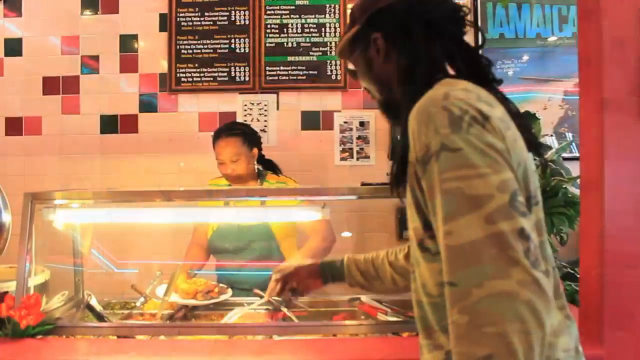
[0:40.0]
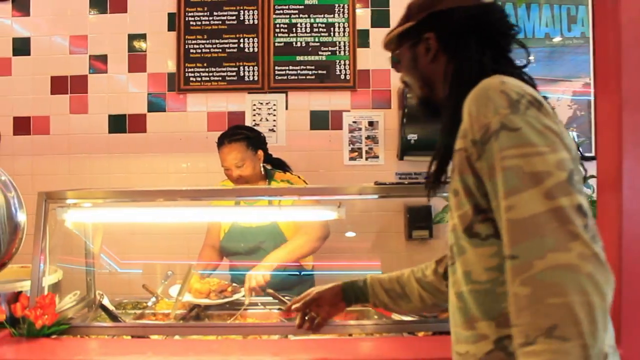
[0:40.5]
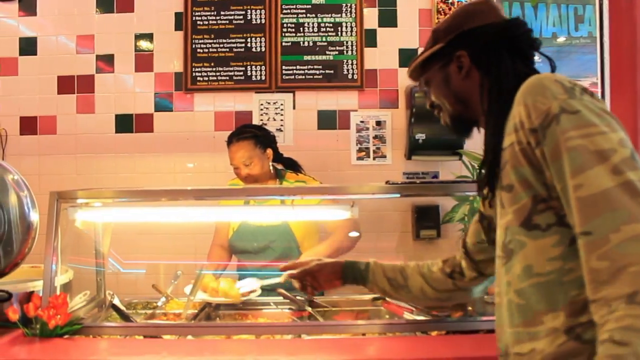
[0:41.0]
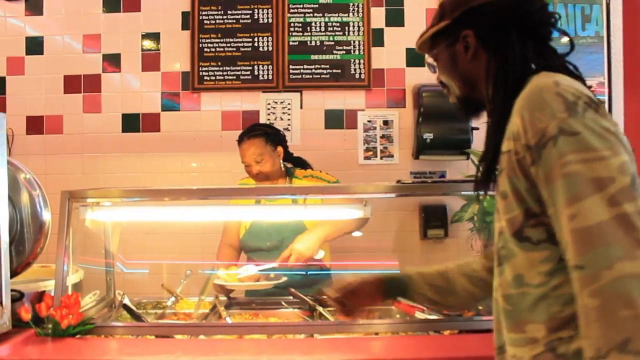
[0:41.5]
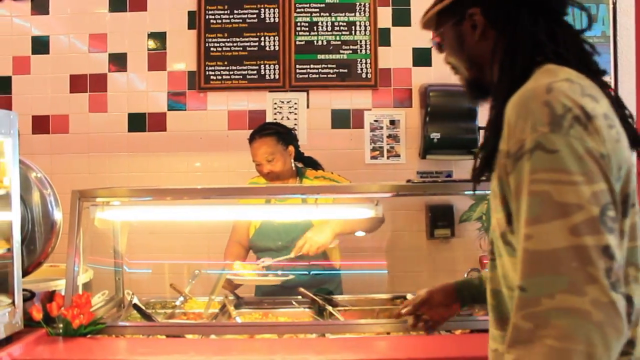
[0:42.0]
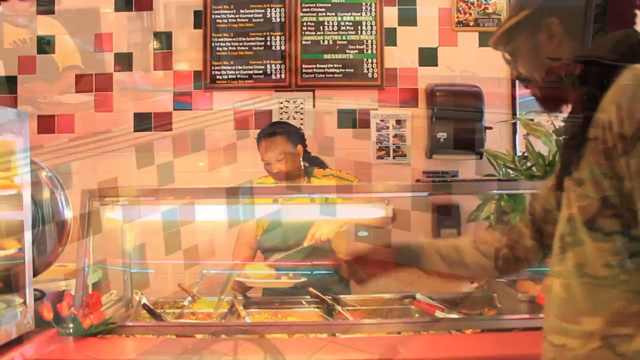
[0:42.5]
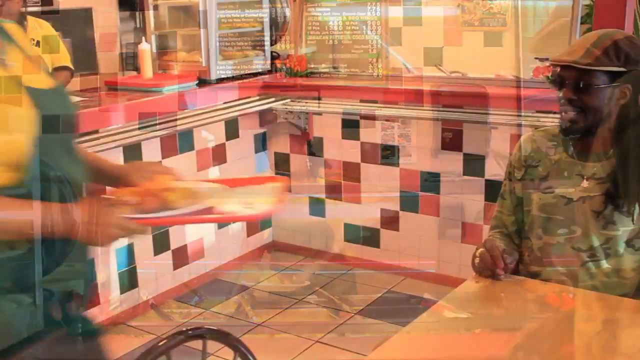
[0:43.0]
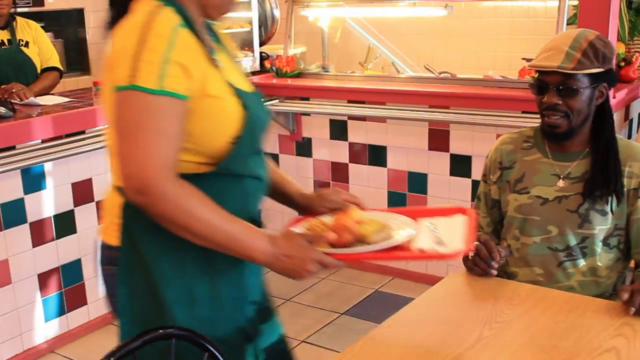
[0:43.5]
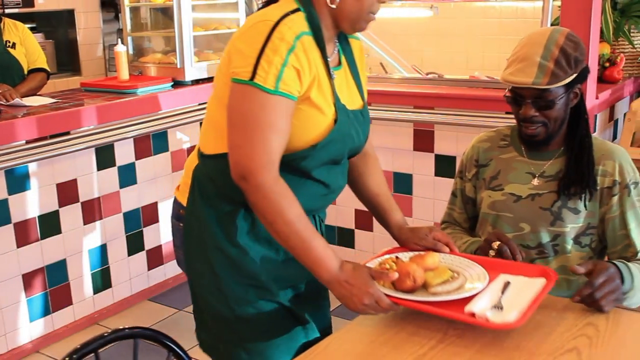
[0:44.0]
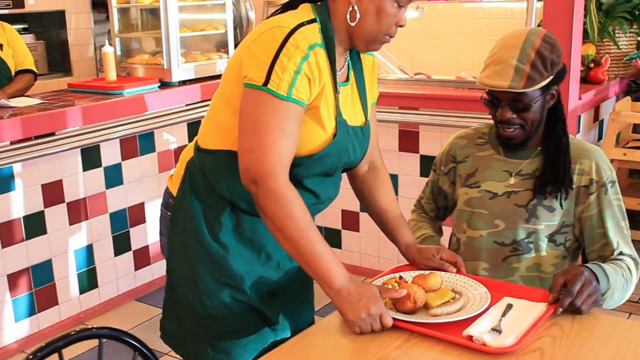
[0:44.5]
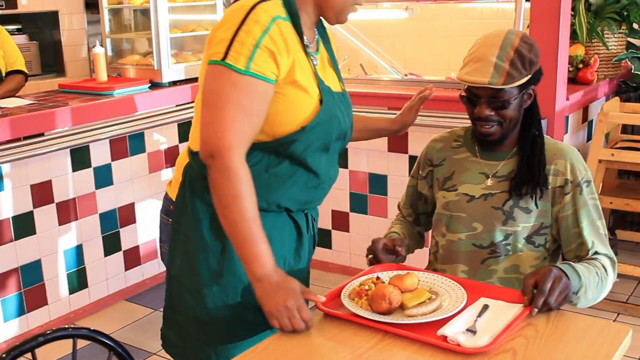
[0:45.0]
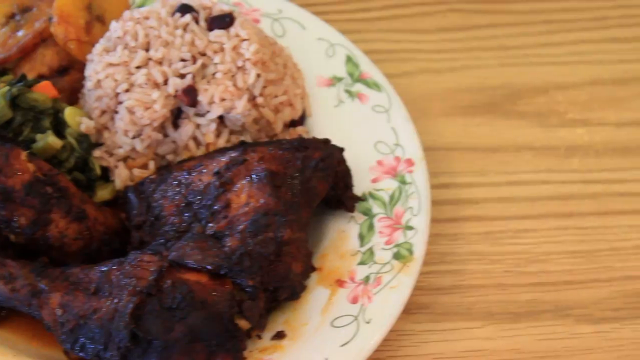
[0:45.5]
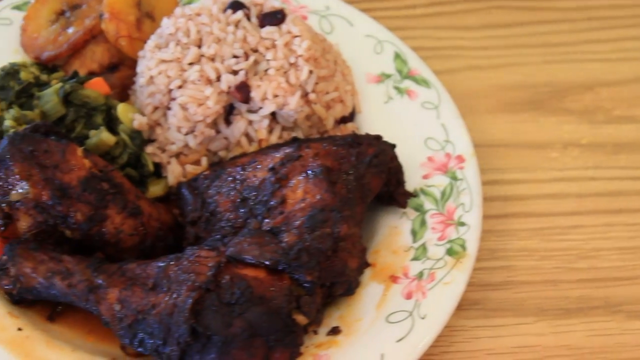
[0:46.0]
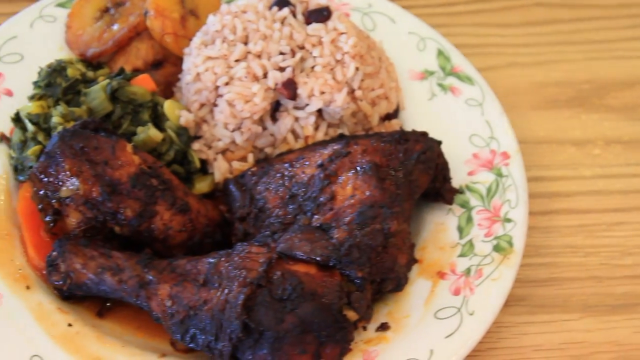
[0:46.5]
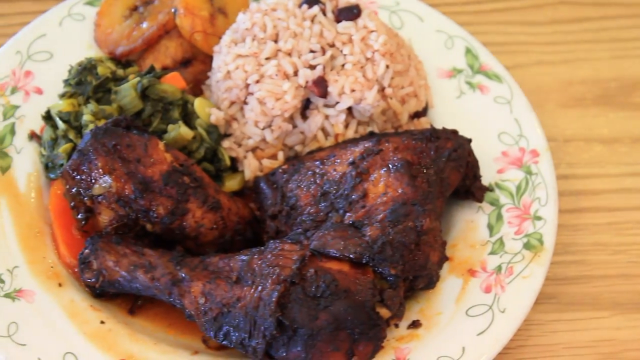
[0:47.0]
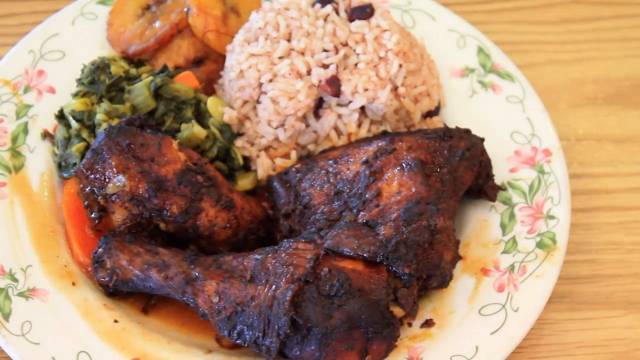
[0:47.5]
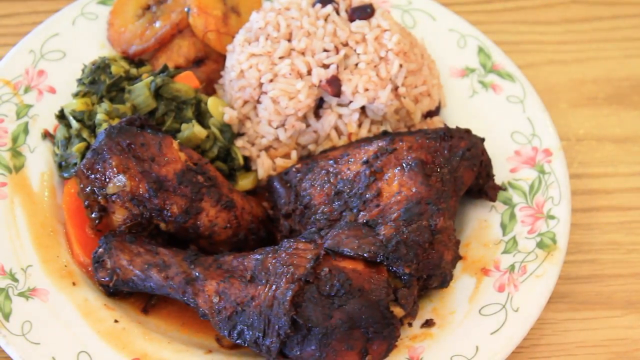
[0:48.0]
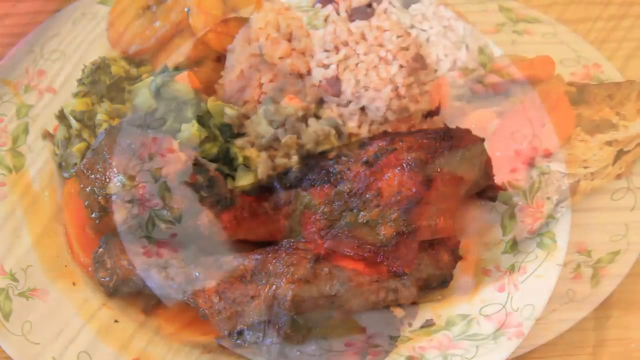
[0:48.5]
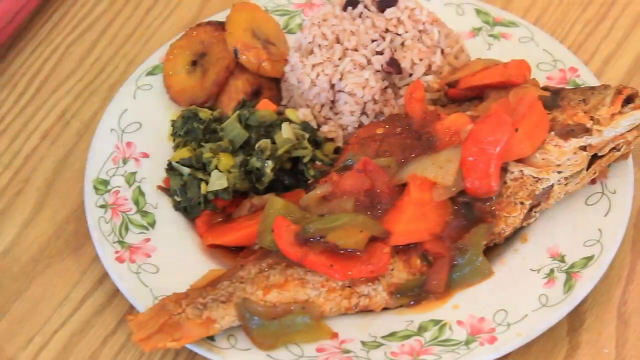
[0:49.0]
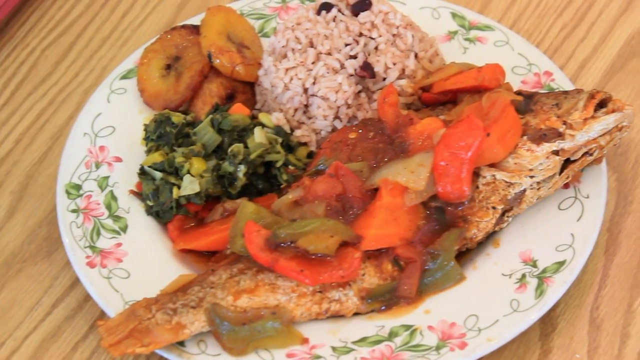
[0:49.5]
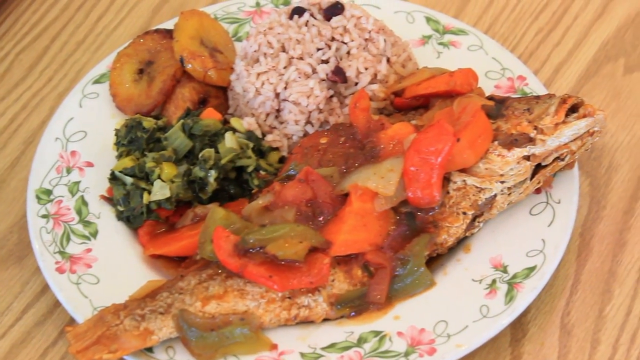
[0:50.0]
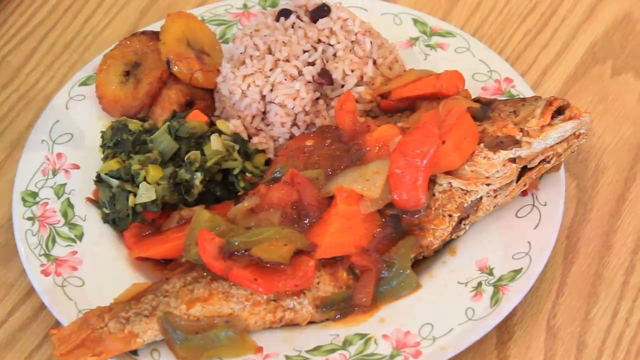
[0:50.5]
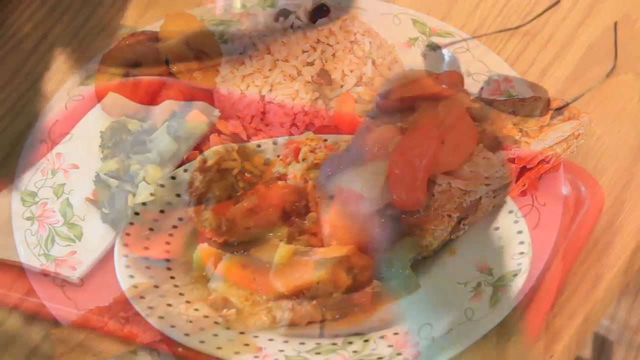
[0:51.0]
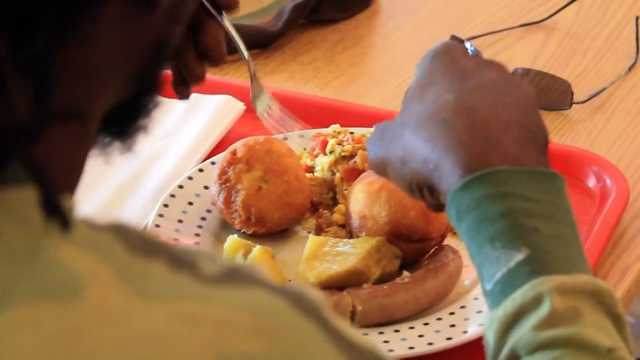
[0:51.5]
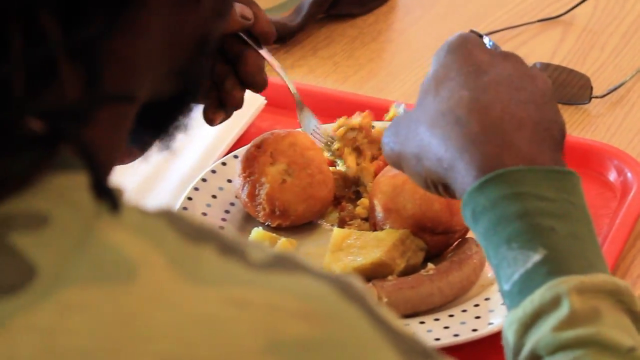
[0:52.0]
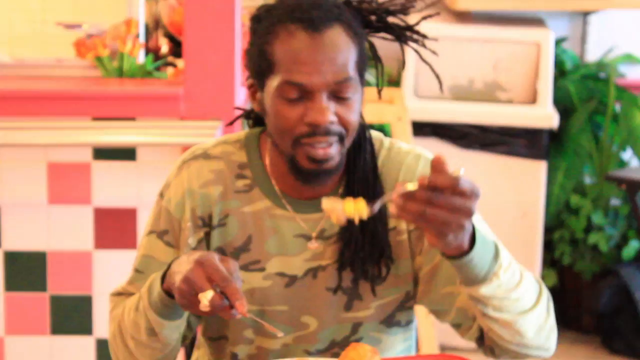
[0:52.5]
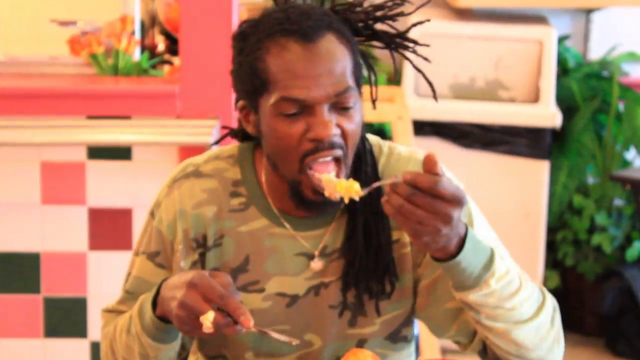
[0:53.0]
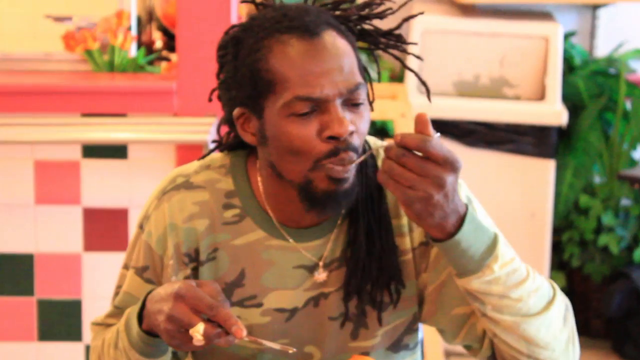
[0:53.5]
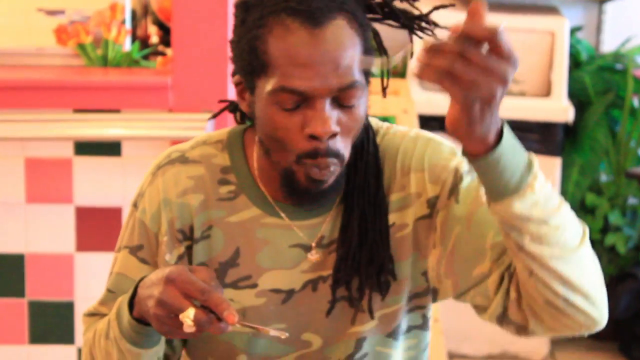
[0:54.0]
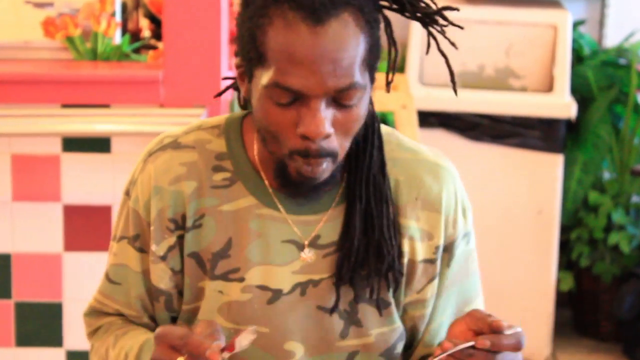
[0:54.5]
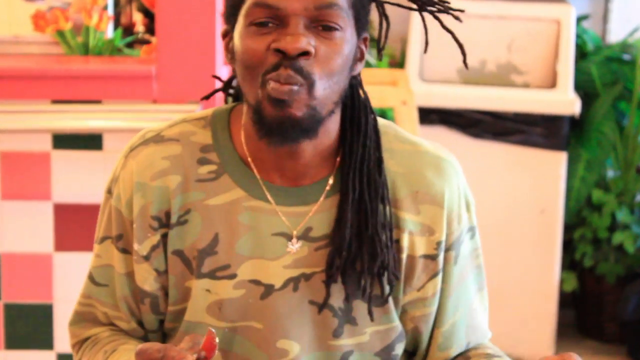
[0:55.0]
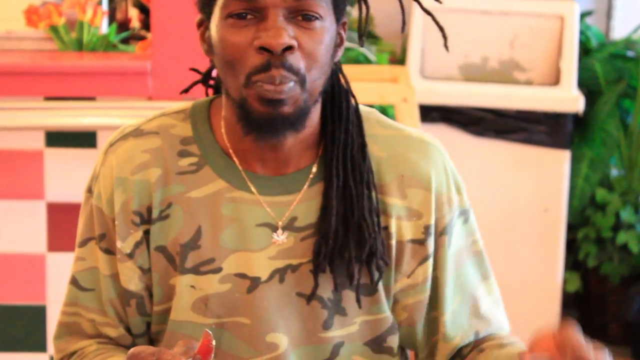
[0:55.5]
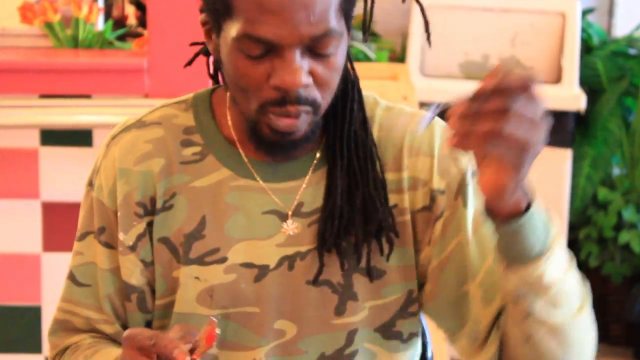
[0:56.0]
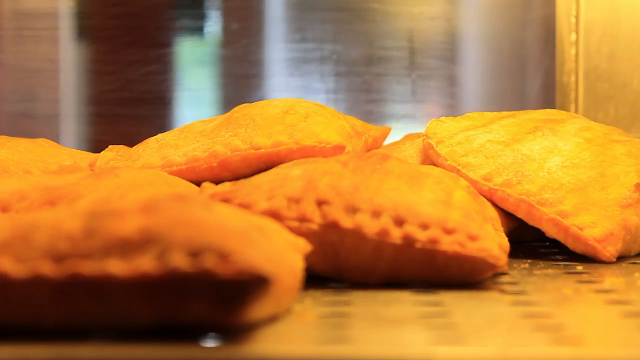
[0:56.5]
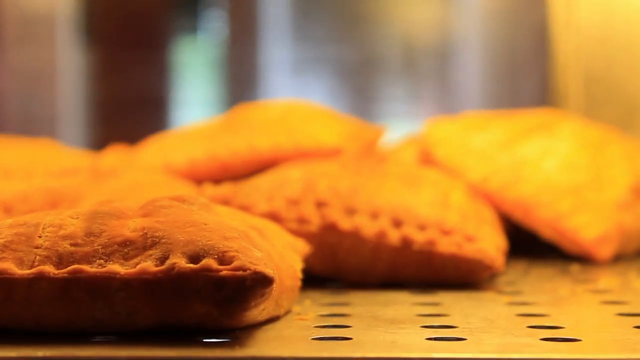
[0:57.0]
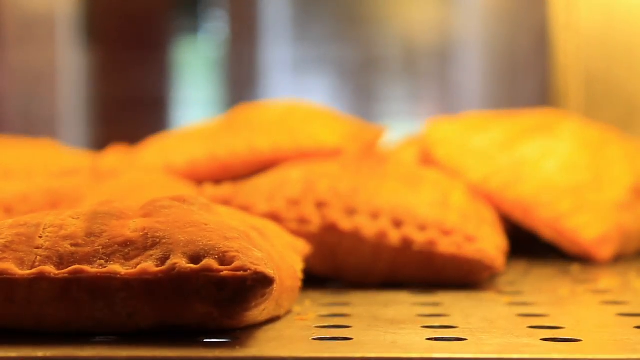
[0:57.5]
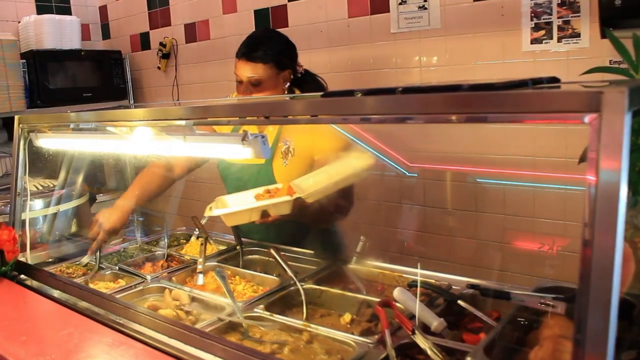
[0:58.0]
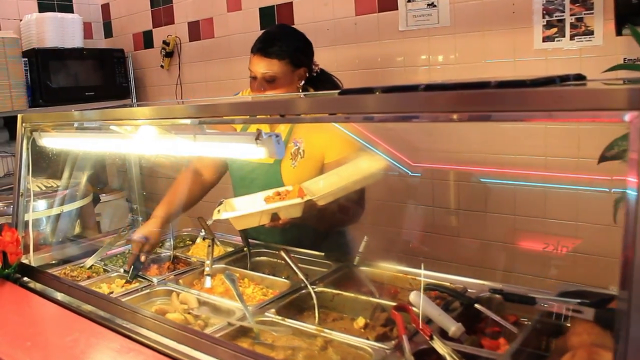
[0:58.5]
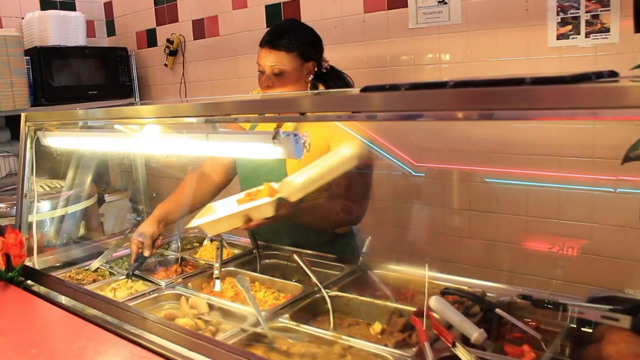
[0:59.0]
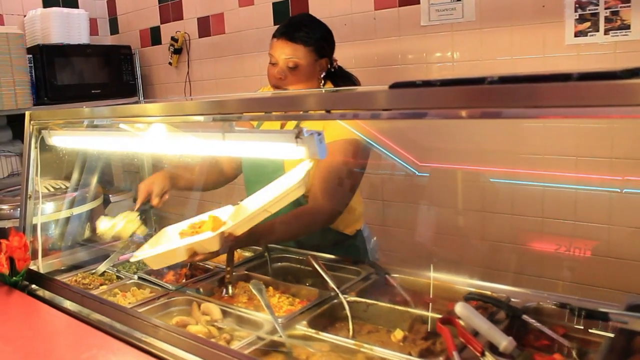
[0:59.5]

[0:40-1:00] The man wears a camo shirt; he is a Jamaican man with a short to medium beard. A woman takes his order and serves him. A plate of rice, beans and peas, and chicken is shown, with a little bit of vegetables and plantains on the side. The man eats, taking bites and enjoying the food. Next, three crispy, golden-brown Jamaican patties are shown. Then a woman puts an order into takeout.